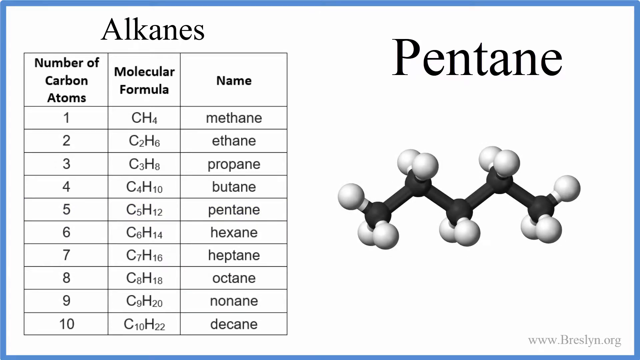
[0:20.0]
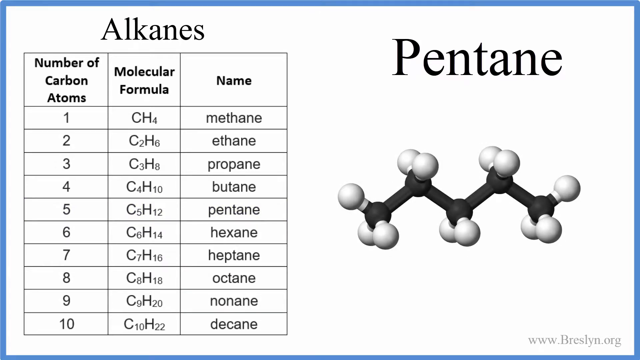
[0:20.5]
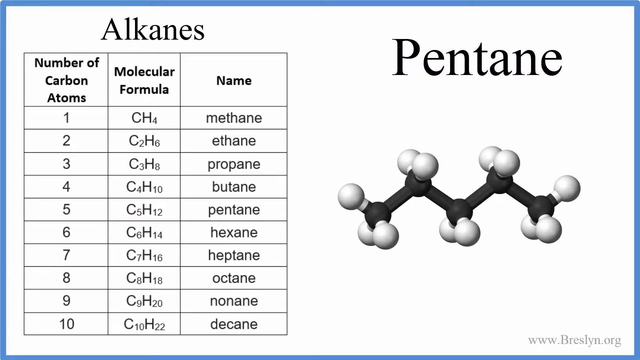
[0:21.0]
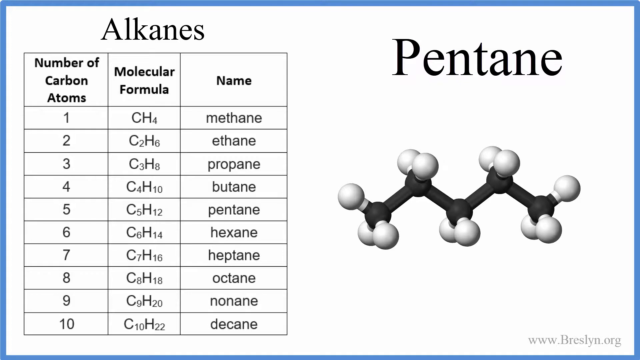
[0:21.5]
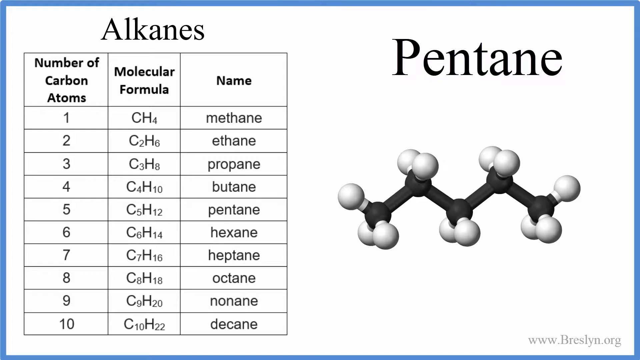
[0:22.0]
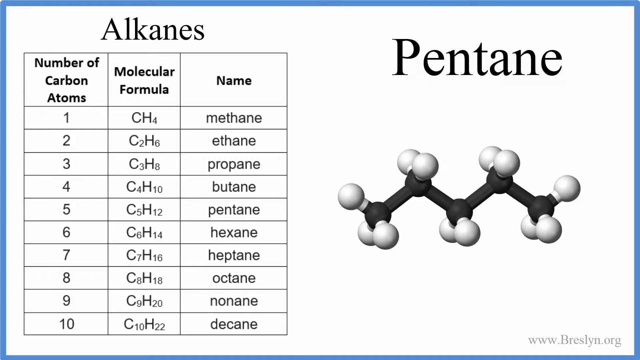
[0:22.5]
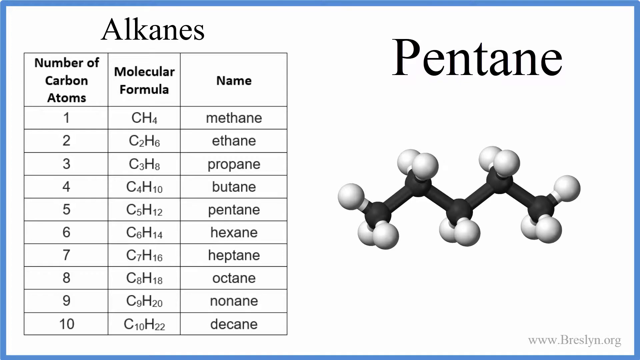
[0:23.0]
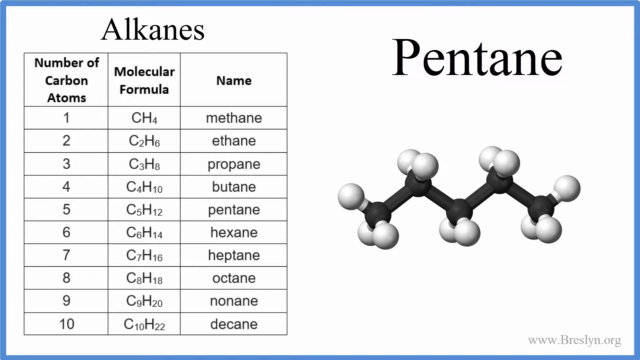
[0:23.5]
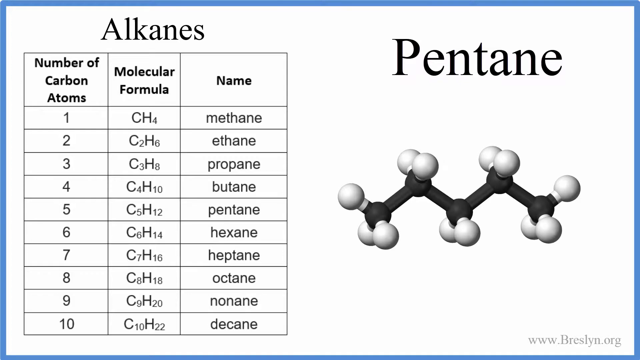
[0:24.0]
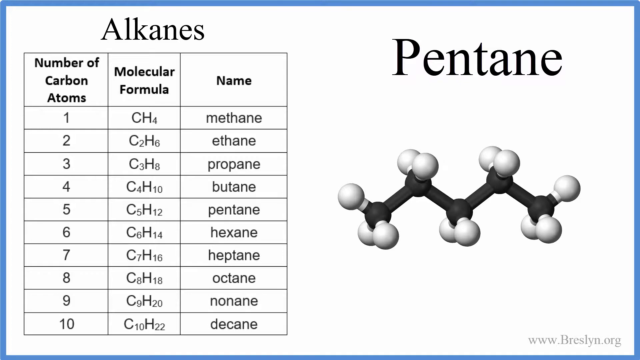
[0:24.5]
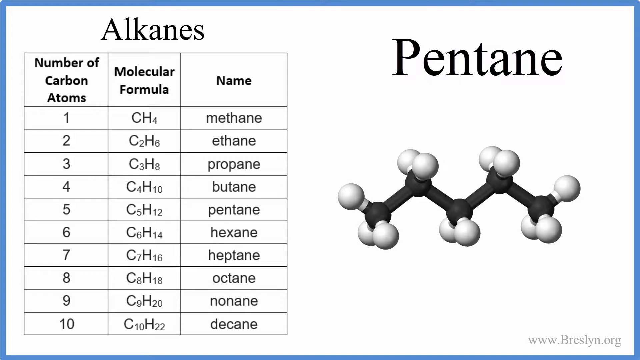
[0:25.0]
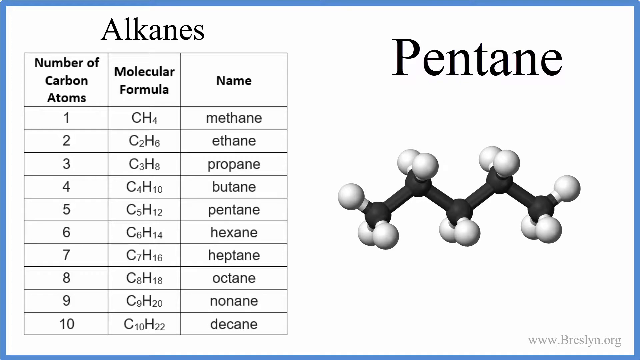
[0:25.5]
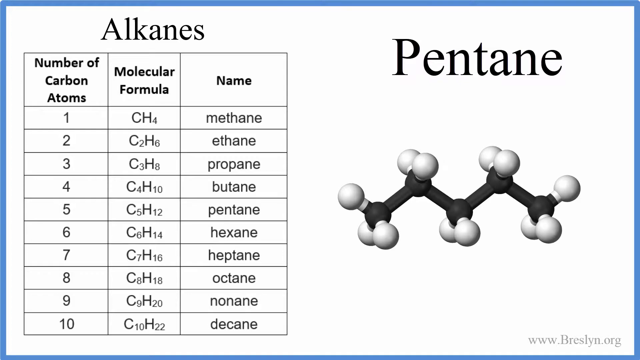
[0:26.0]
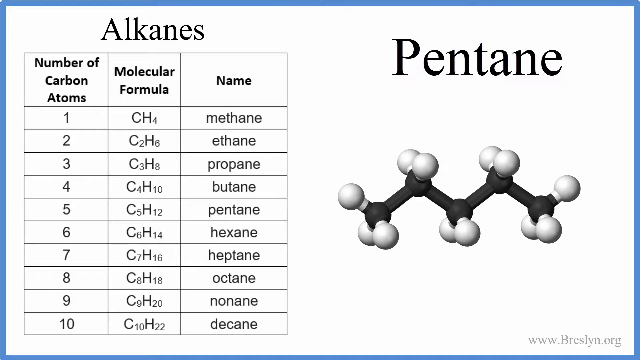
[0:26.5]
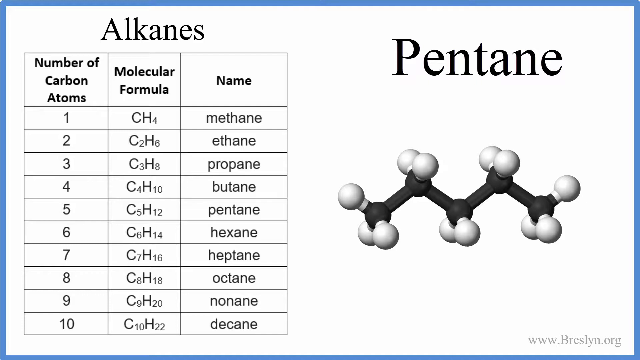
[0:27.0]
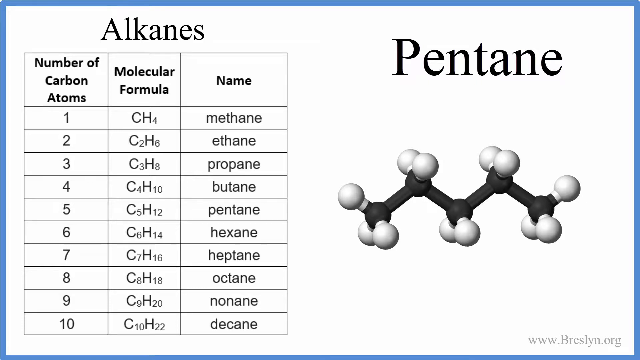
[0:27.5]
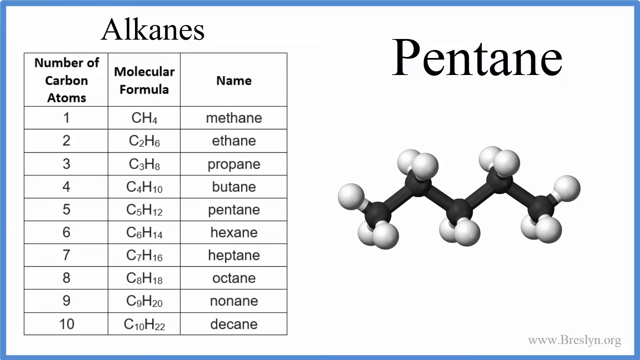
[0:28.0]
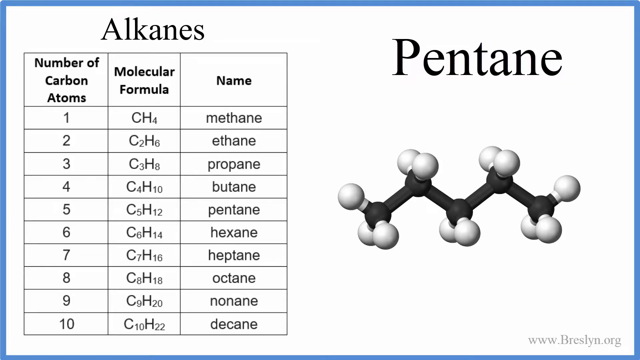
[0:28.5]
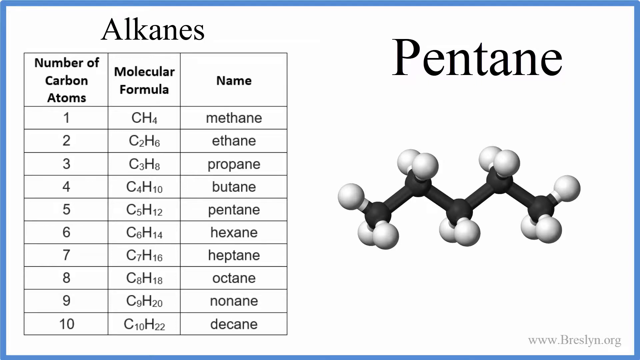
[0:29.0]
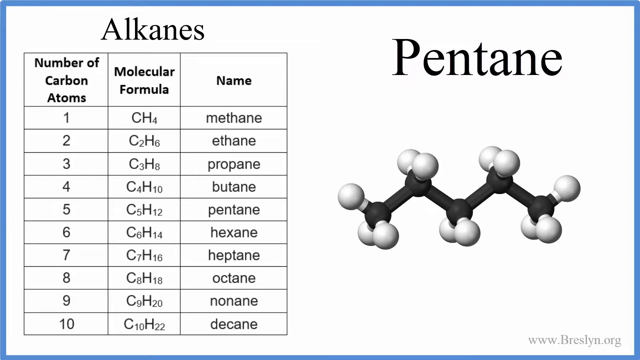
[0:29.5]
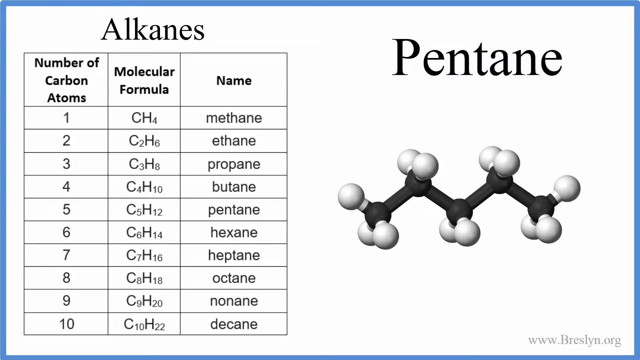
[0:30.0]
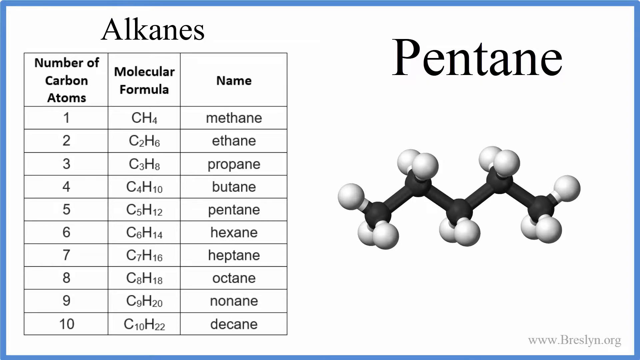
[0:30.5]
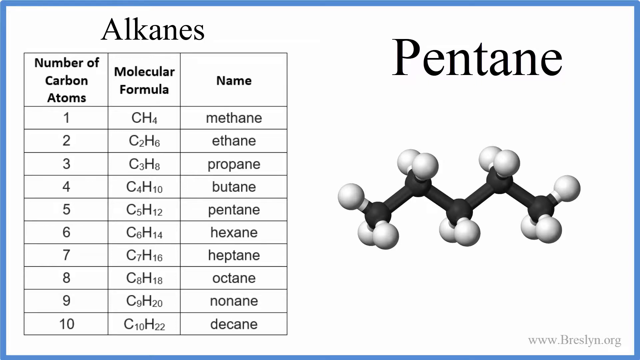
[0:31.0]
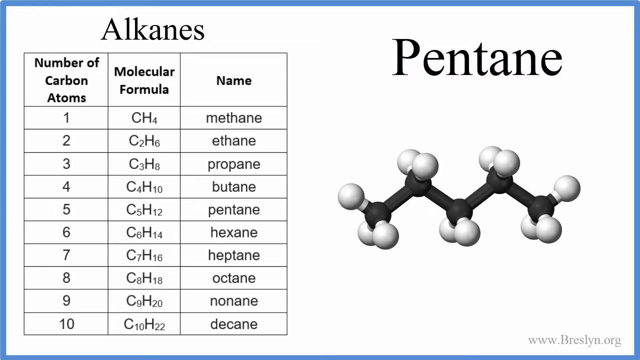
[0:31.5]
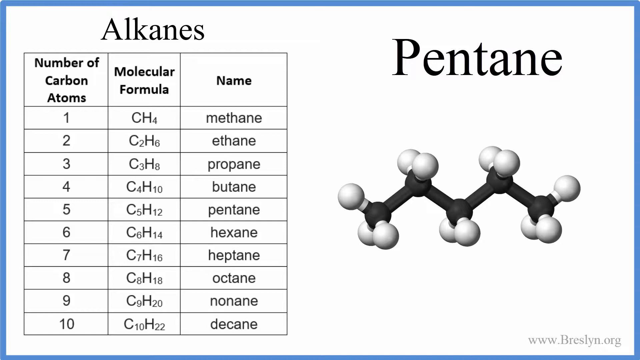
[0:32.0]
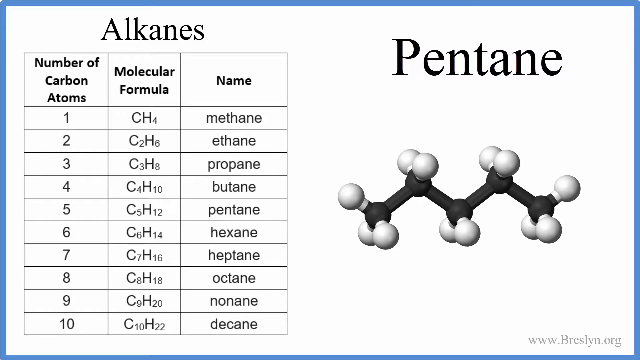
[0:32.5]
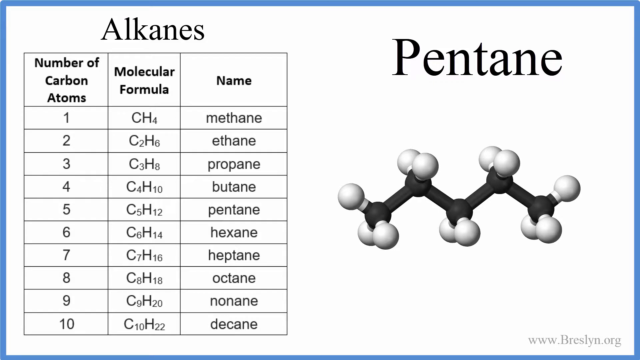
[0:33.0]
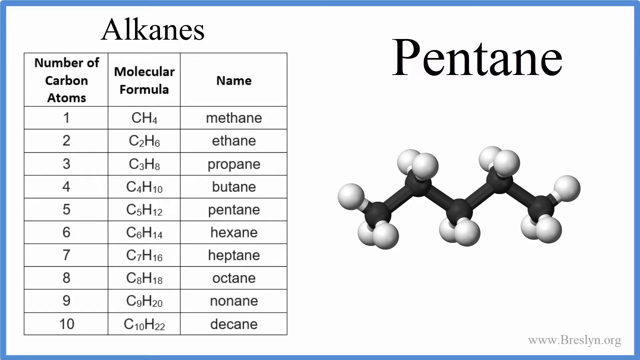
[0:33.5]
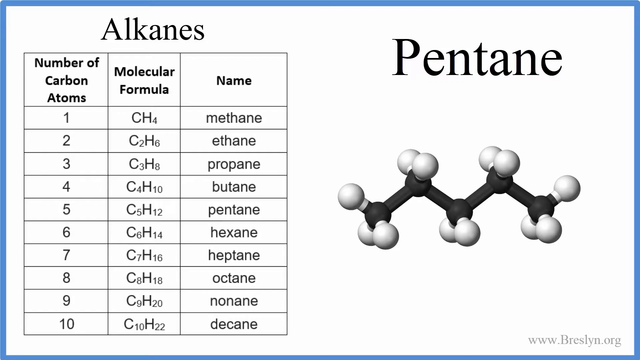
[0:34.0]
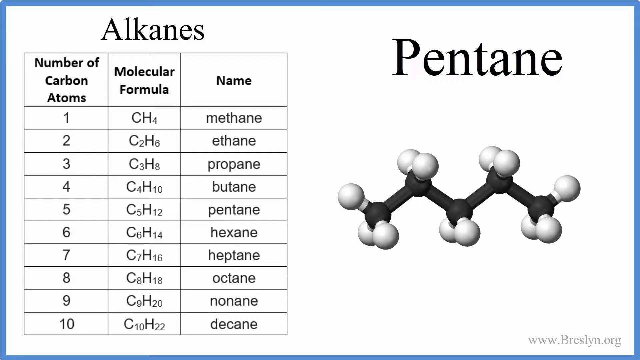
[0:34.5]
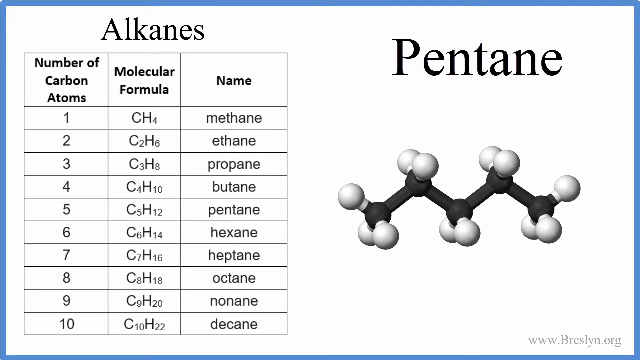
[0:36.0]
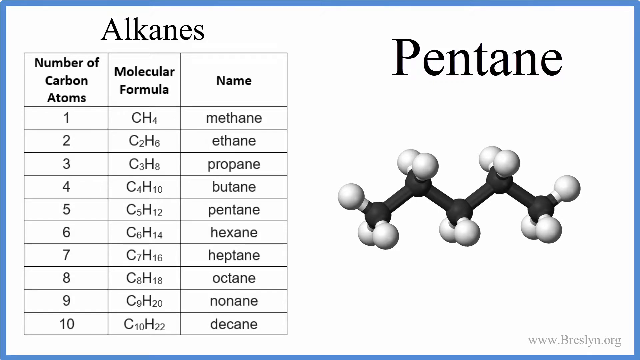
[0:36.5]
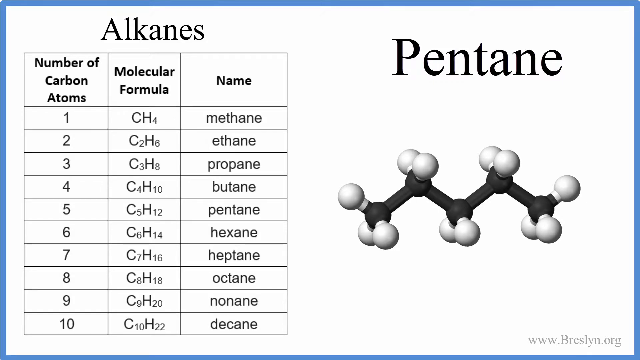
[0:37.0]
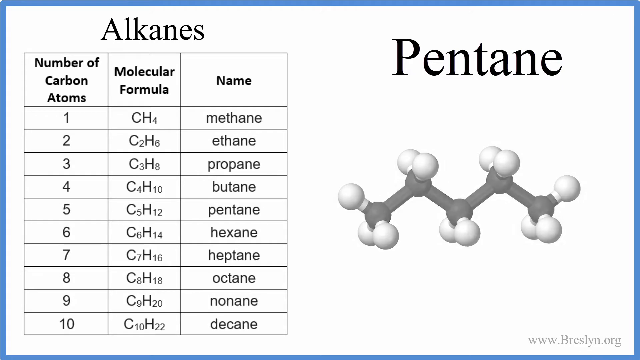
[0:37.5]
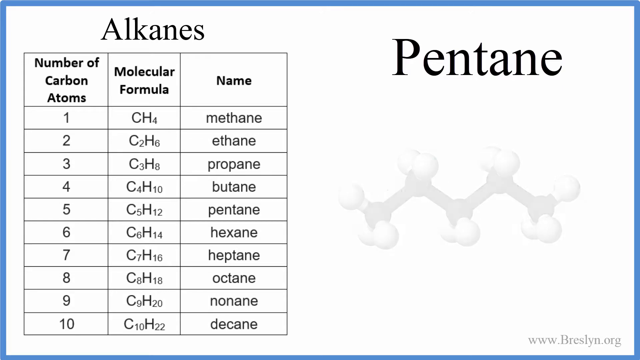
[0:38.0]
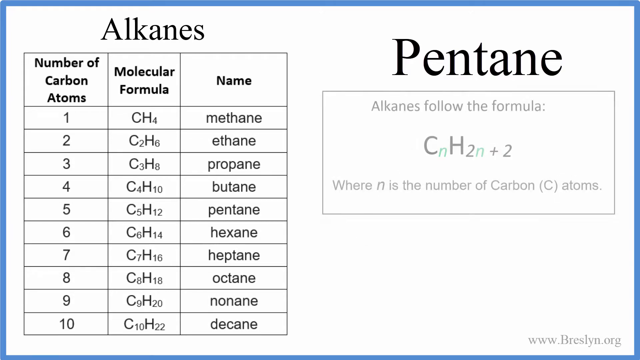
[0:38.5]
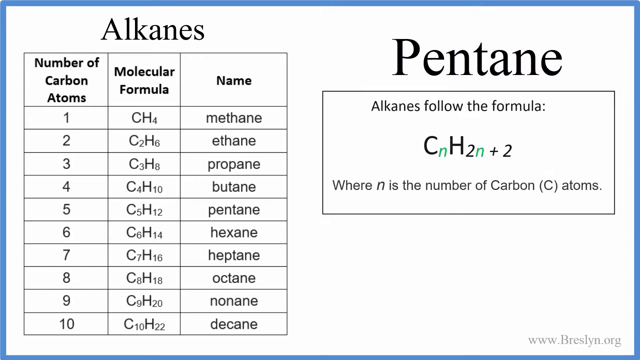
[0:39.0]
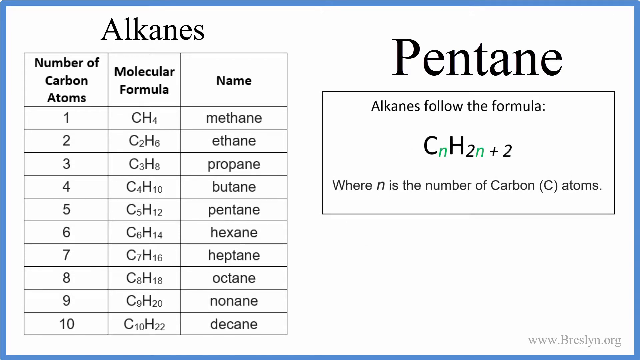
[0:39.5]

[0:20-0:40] In the chart, the molecular formula starts with CH4, and going down from 1 to 10 carbon atoms, the C count grows from 1, 2, 3, 4 up to 10. The H count grows by the next even number, starting with H4, then H6, H8, all the way to H22. The molecular formulas are written in capital letters, capital C and capital H. The molecular structure then vanishes, and a box appears that reads "the alkanes follow the formula". It shows a capital C with a lowercase n at its bottom right corner, then a capital H with 2n in green at its bottom right corner, plus 2. The formula indicates that n is the number of carbon atoms, with C standing for carbon.